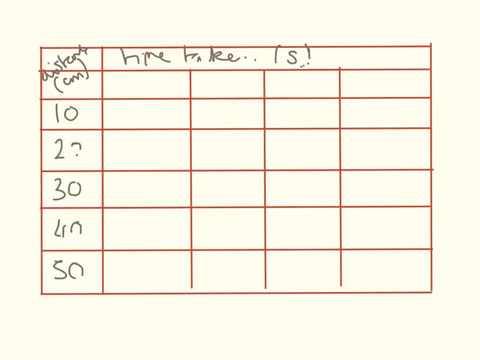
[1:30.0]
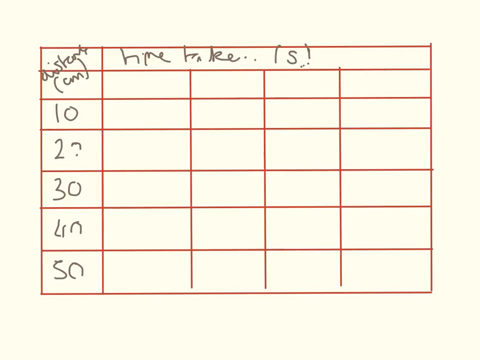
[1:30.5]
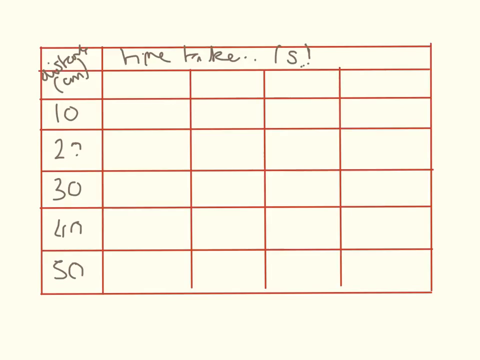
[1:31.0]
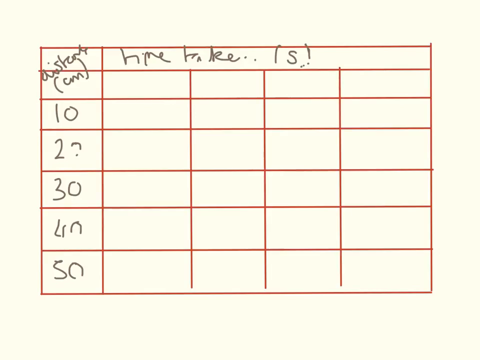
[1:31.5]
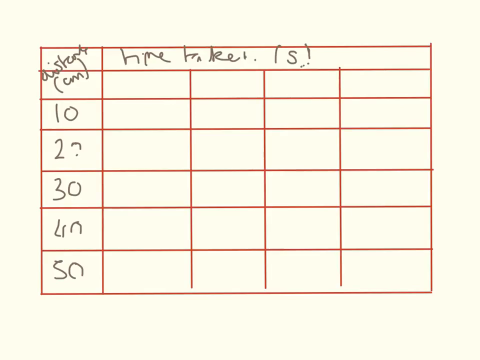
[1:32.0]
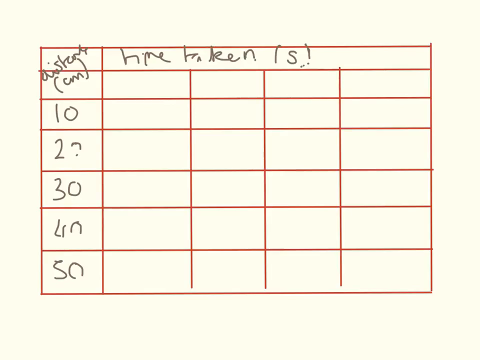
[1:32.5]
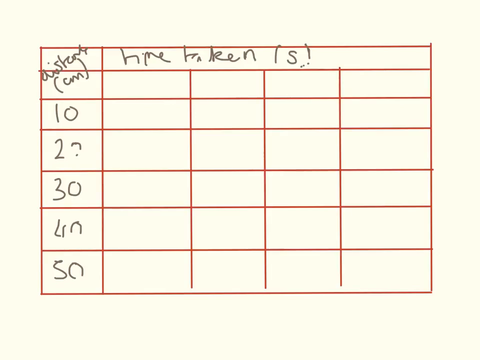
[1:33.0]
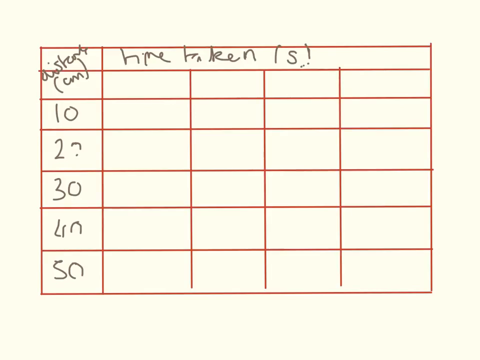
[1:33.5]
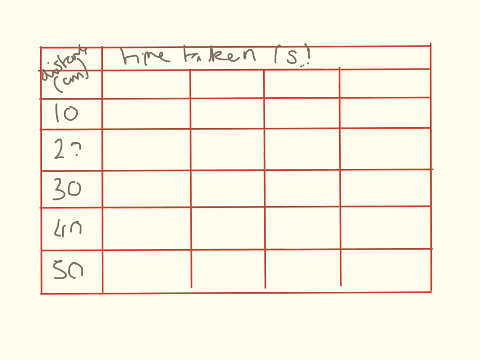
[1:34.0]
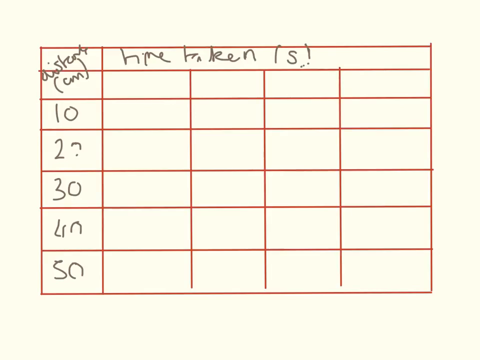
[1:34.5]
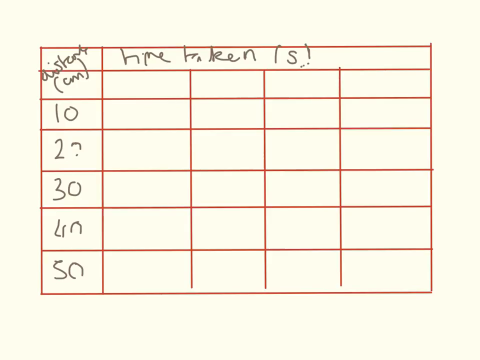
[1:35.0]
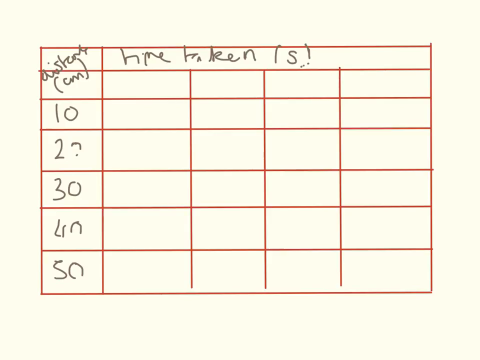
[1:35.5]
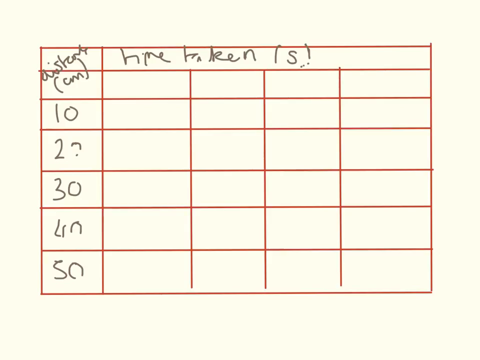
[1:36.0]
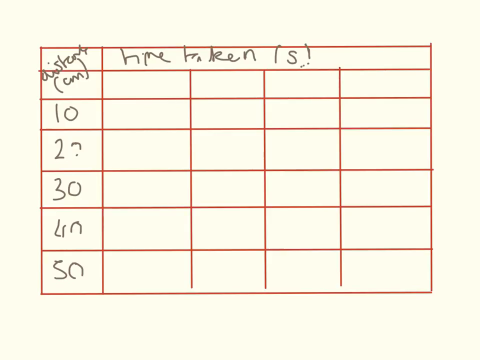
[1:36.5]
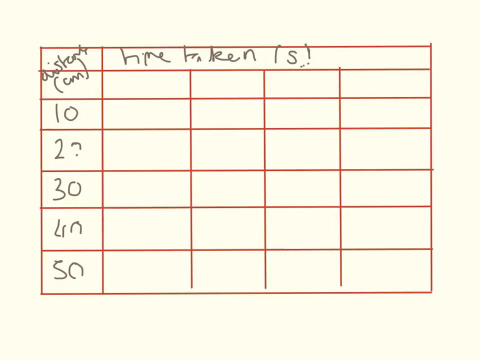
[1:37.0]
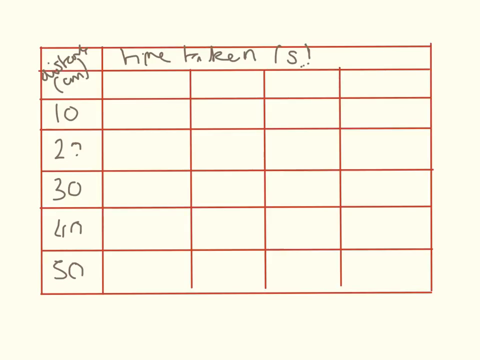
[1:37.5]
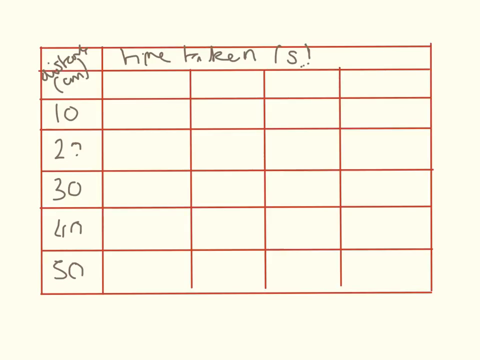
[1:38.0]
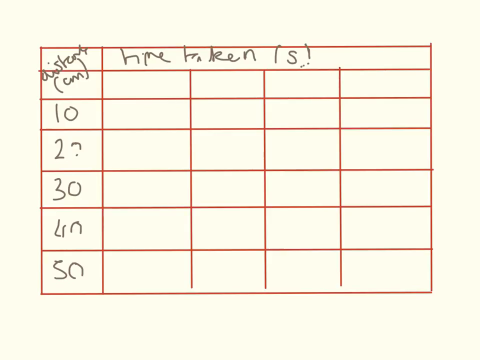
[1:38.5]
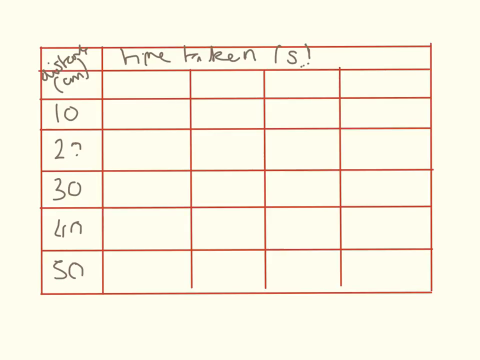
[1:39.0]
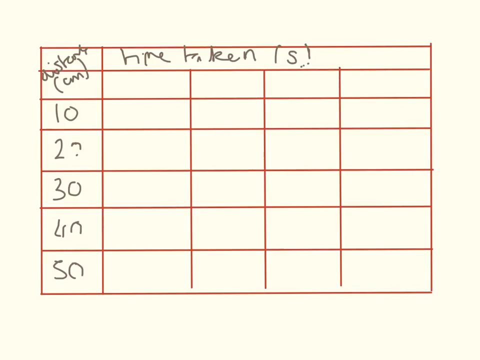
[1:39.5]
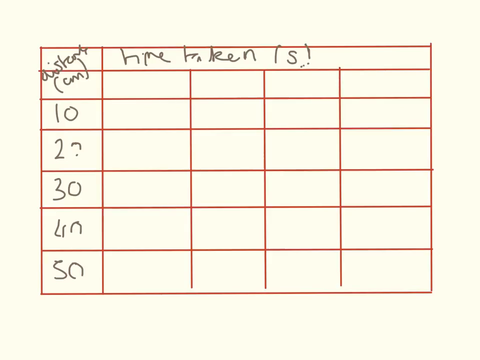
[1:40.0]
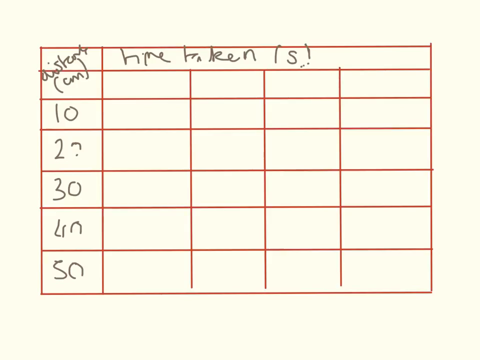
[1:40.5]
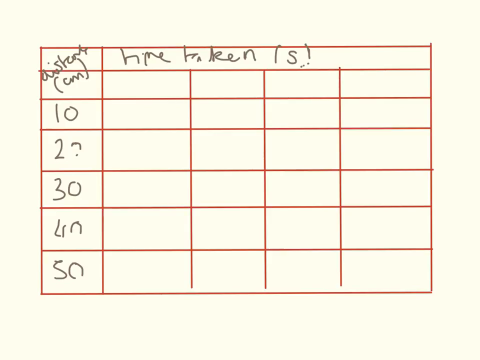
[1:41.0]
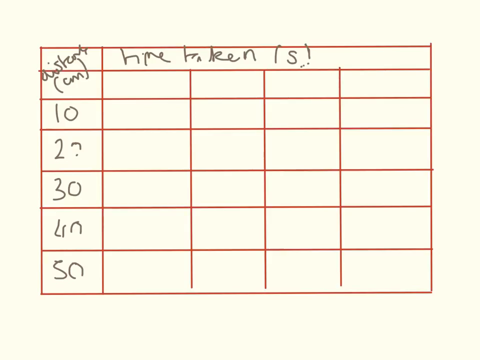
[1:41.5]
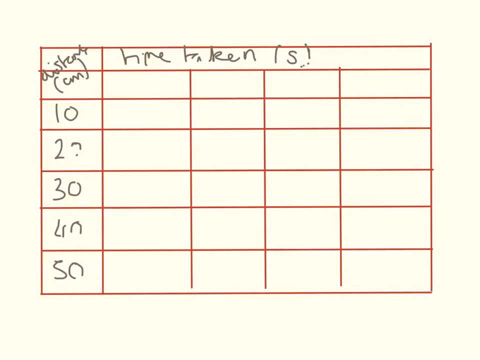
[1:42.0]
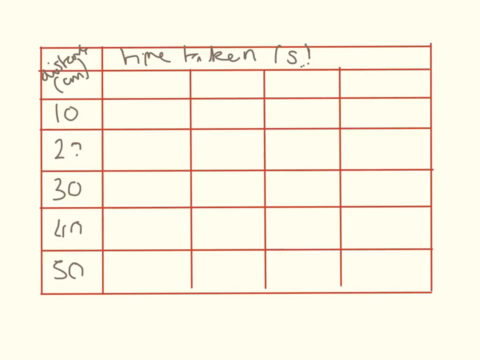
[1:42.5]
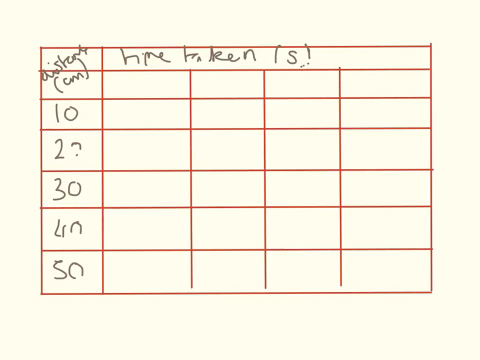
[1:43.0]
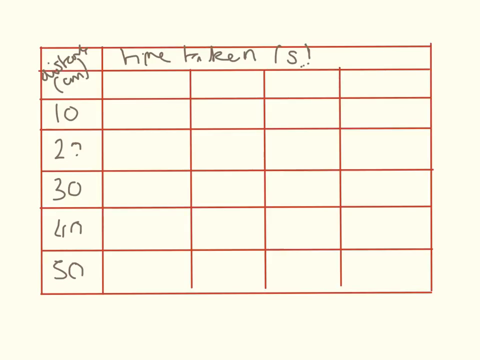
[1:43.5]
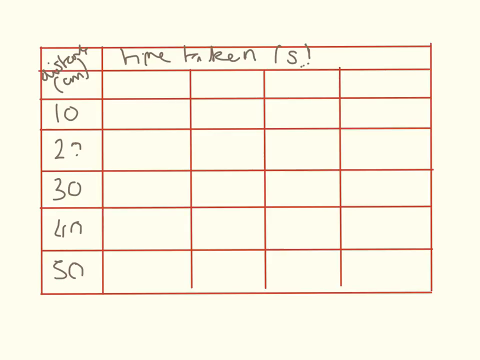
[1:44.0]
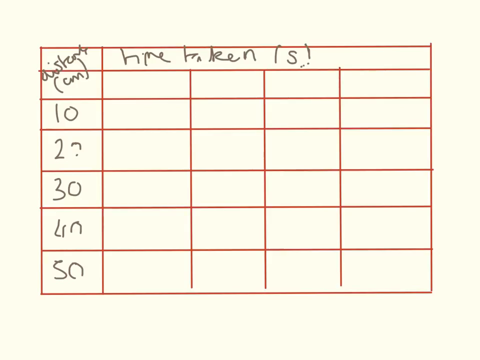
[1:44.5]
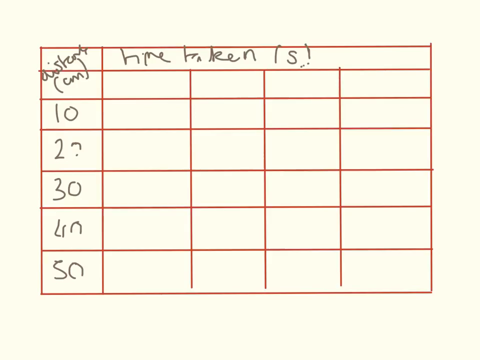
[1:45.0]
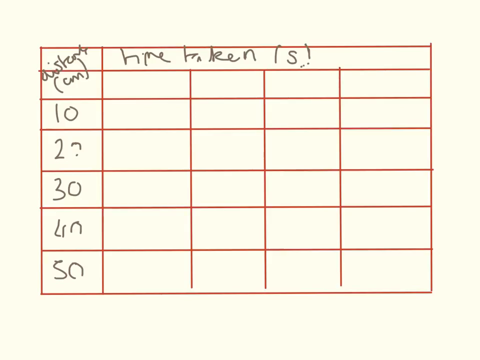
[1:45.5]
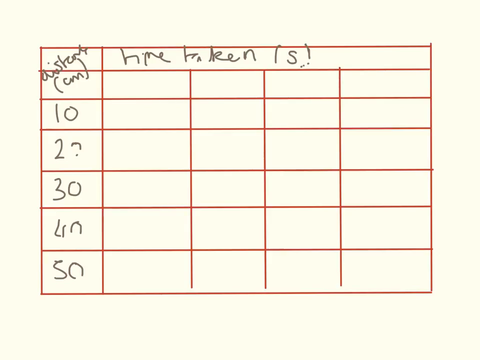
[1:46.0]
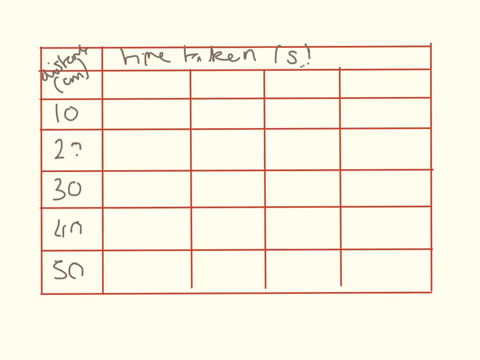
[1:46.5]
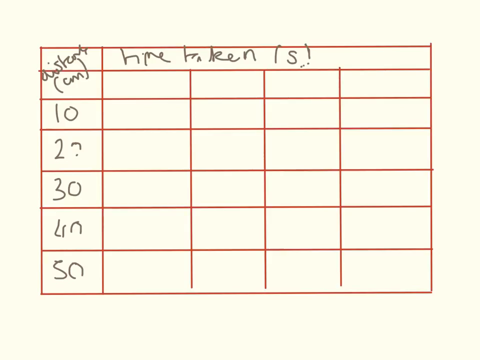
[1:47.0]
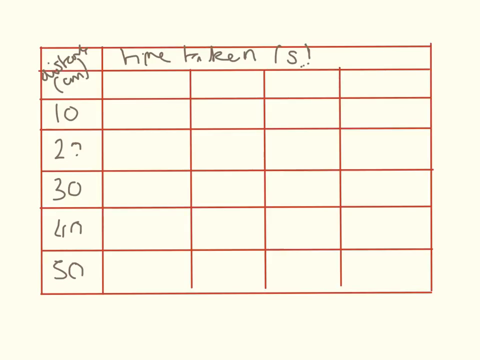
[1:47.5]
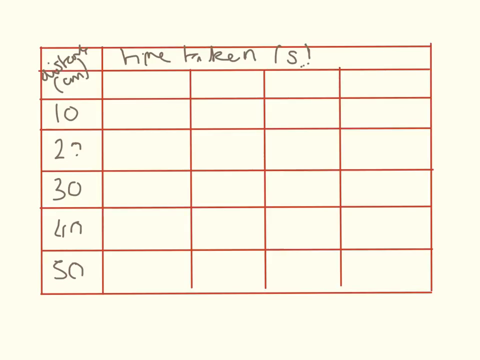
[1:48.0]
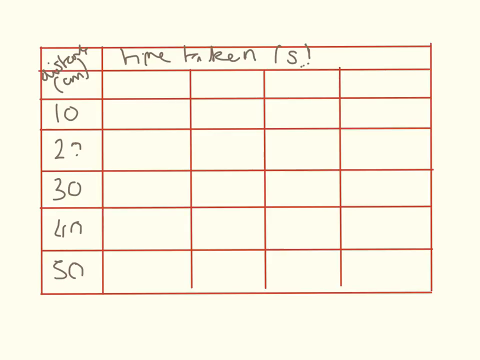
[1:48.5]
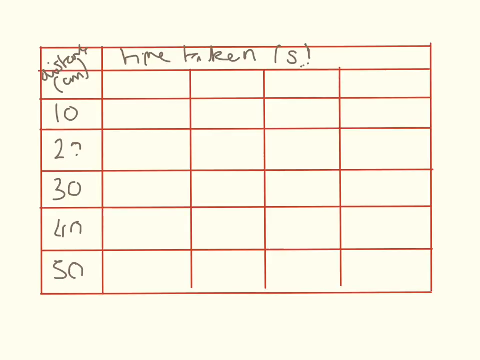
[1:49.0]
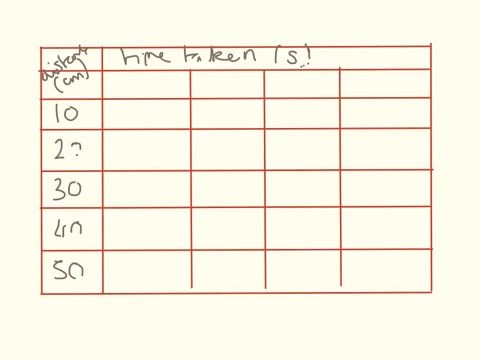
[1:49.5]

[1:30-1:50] A red grid box is on a yellow background, with four horizontal lines and six other lines, and all the boxes are different sizes, some larger and some smaller. A section at the top holds a title in gray text that is hard to make out. Other cursive gray text includes the word "centimeter," and gray numbers on the left read 10, 20, 30, 40, 50, with some of the circles somewhat cut off as if missing color, which makes some hard to read, such as the 20. Some of the text at the top is adjusted, and it looks like it says "taken."